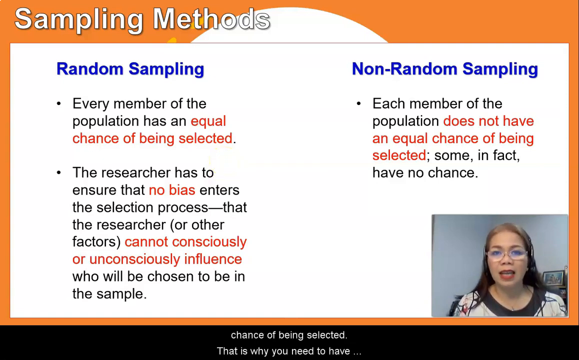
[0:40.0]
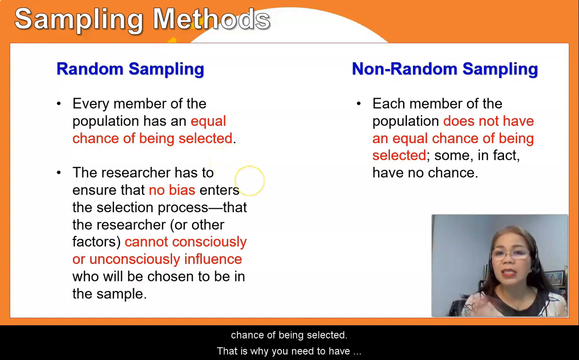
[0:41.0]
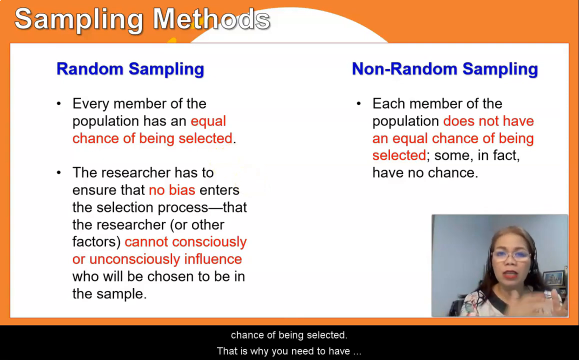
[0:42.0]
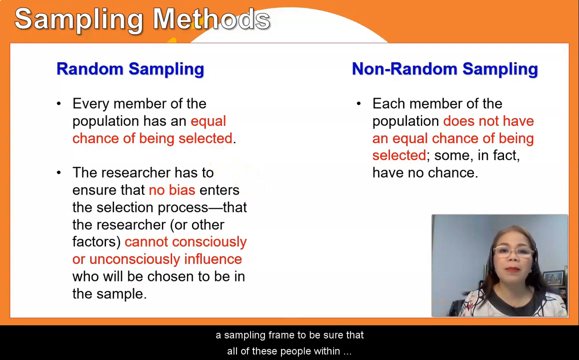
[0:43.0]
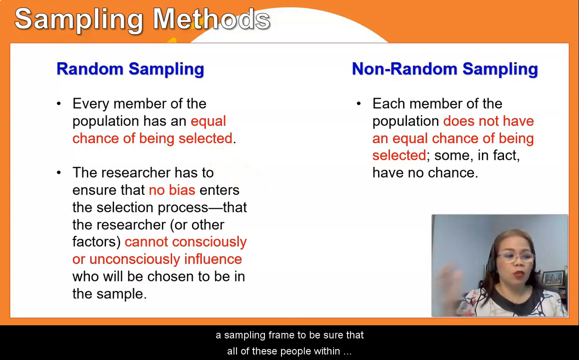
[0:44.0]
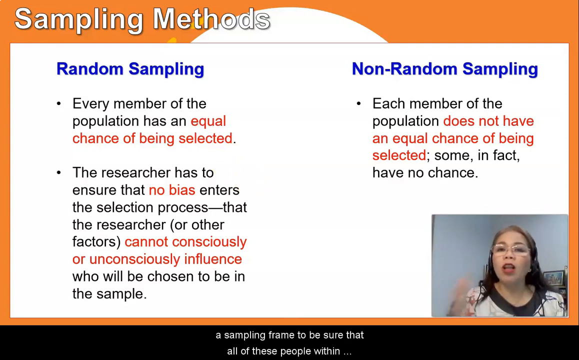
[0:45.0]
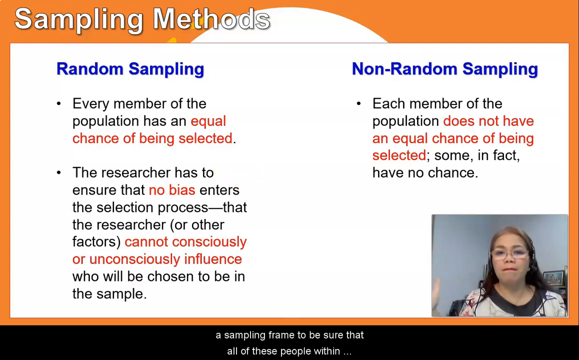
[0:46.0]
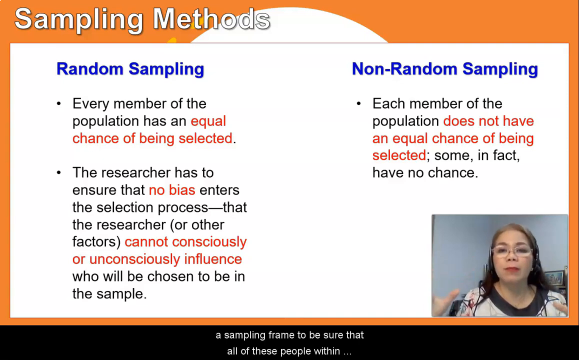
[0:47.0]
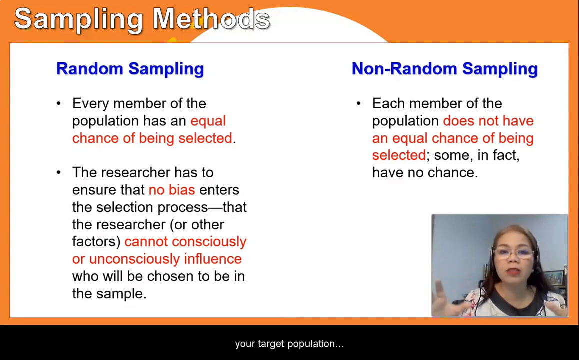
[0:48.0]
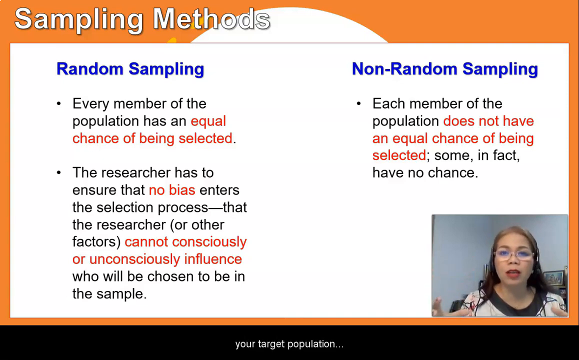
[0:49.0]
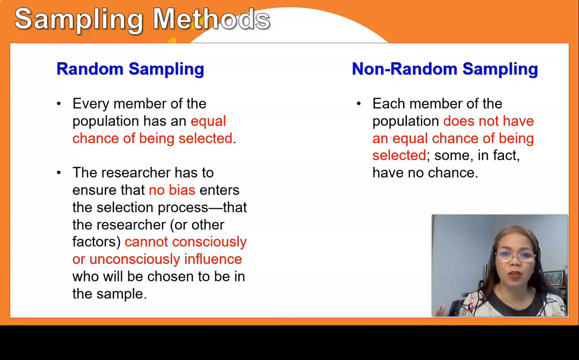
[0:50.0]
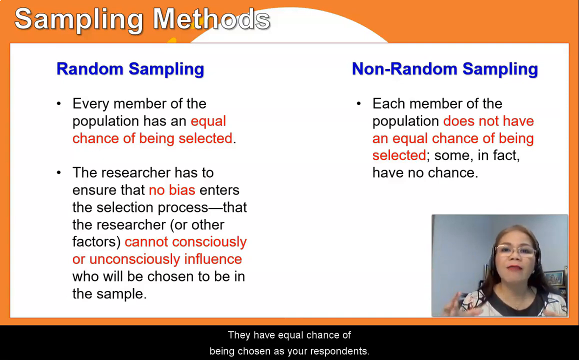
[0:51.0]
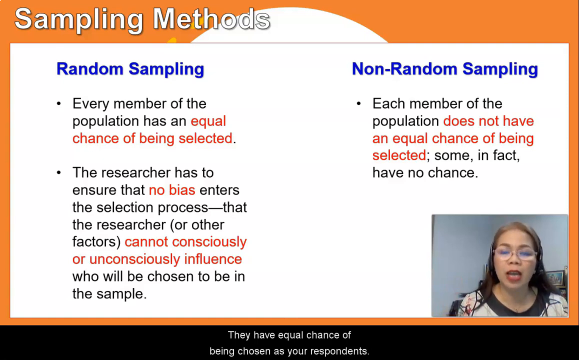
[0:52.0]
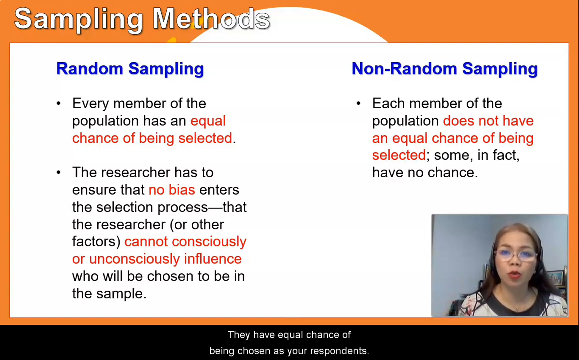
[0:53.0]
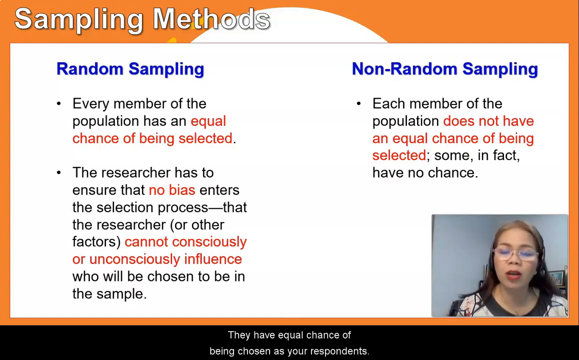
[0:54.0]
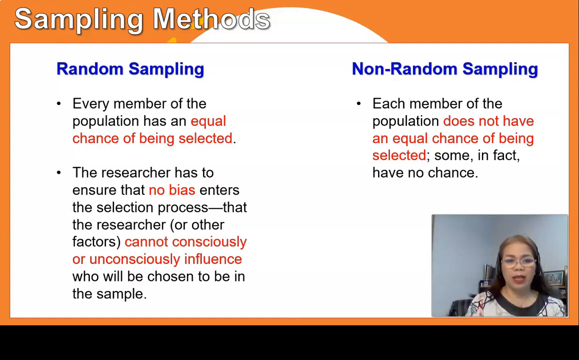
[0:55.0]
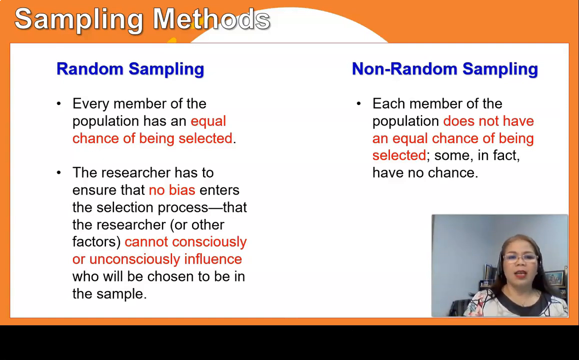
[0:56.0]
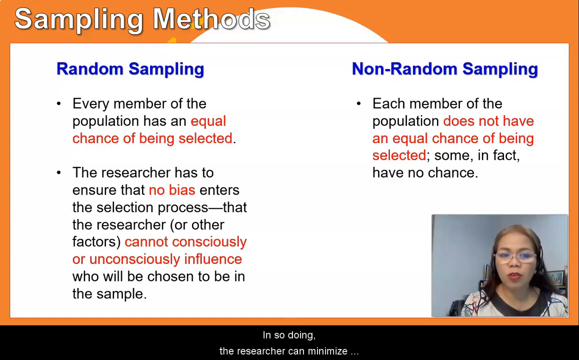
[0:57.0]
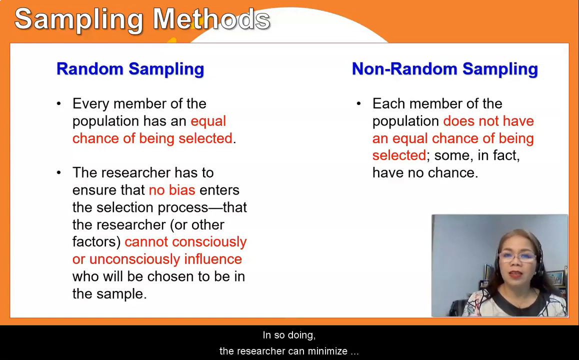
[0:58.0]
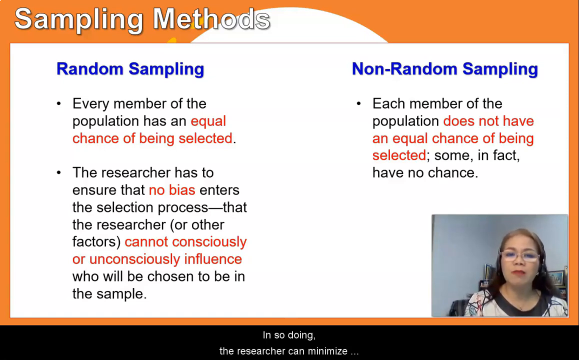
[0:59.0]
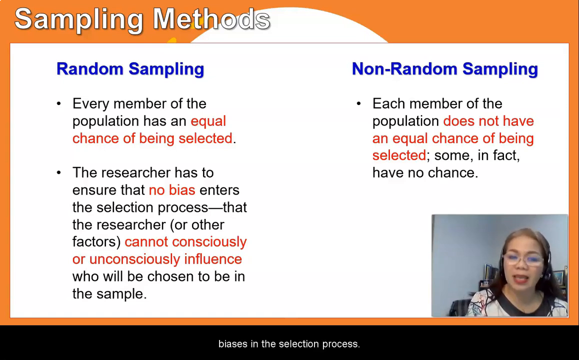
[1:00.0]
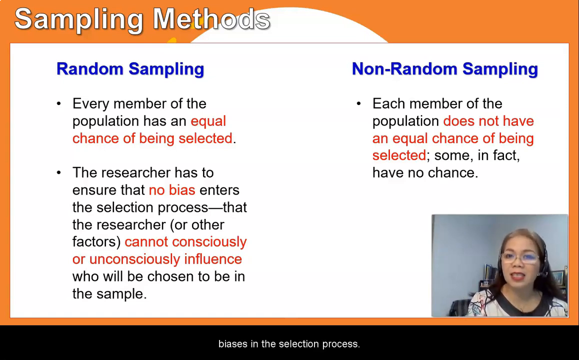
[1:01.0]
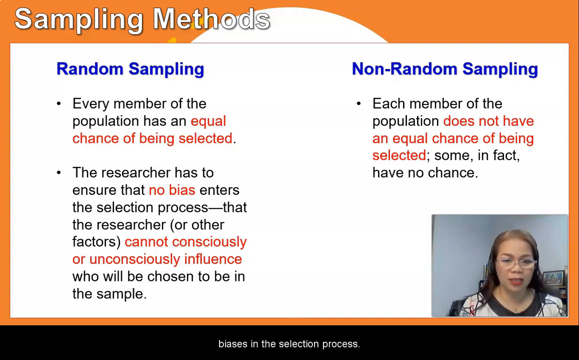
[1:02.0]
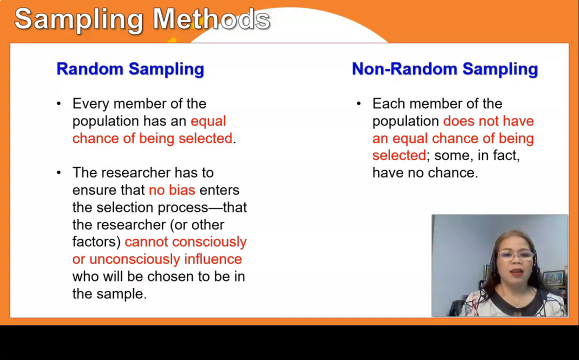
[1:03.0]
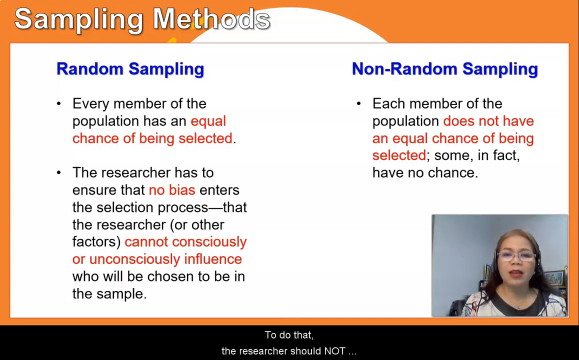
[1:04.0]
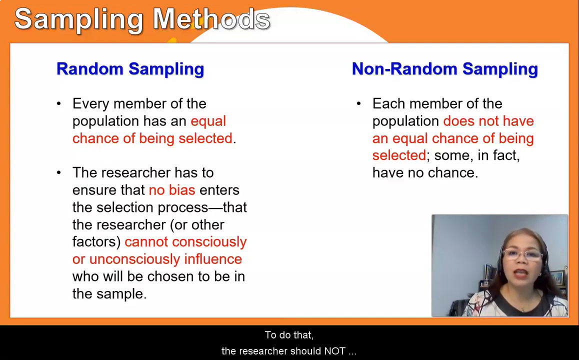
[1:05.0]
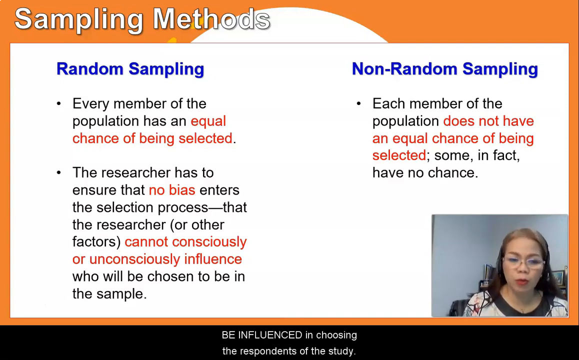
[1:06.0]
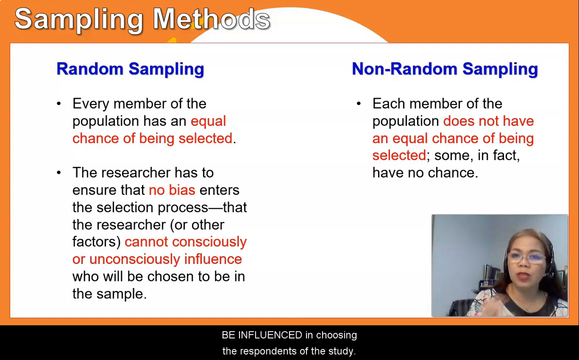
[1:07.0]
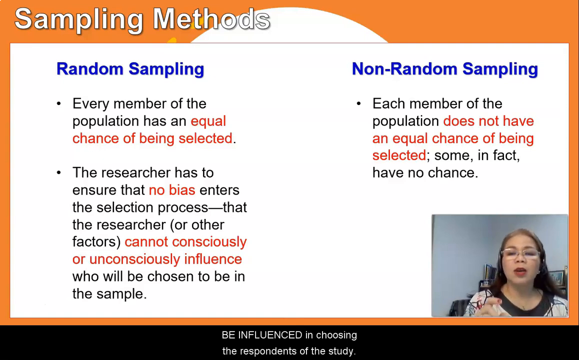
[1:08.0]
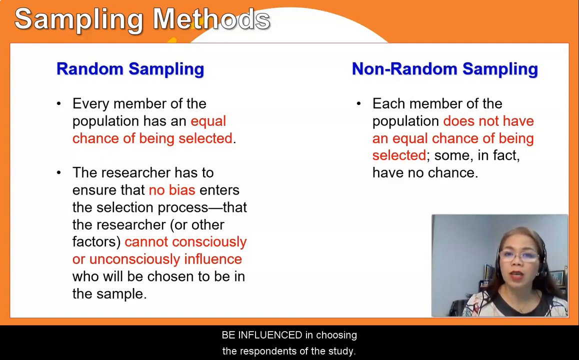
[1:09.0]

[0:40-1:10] The slide about random sampling and non-random sampling stays on screen without advancing; it appears to detail the differences between the two sampling methods. The bullet points state that random sampling means every member of the population has an equal chance of being selected, whereas non-random sampling means each member of the population does not have an equal chance of being selected. In the webcam overlay in the bottom right corner, Dr. Sarah uses her right hand above the camera to gesture about the text, then raises both hands above the camera with open palms, seemingly emphasizing the text. The black bar at the bottom shows changing white captions of the words she is speaking; the only movement comes from the webcam overlay and these captions.